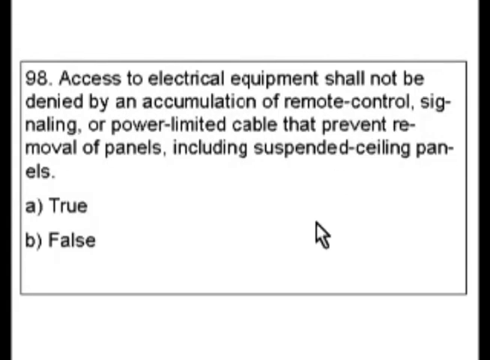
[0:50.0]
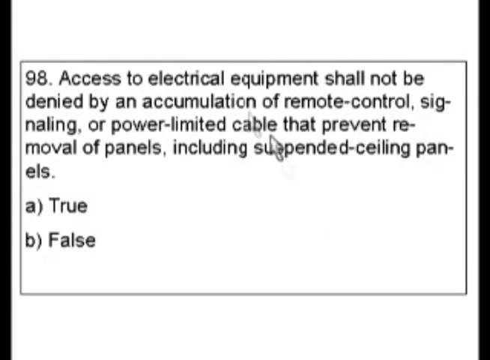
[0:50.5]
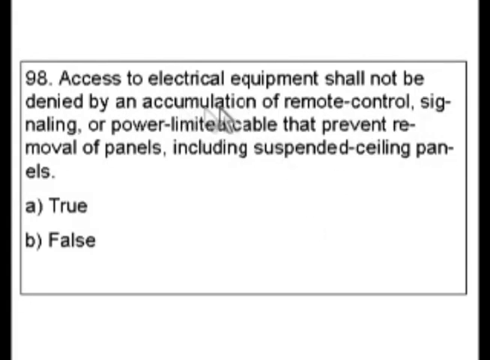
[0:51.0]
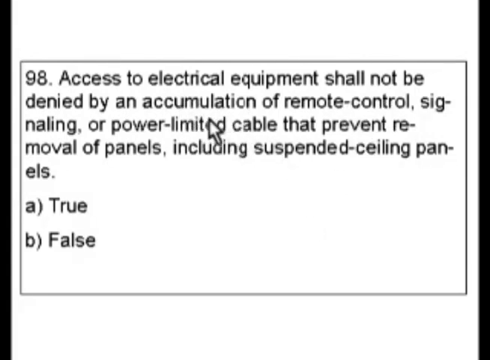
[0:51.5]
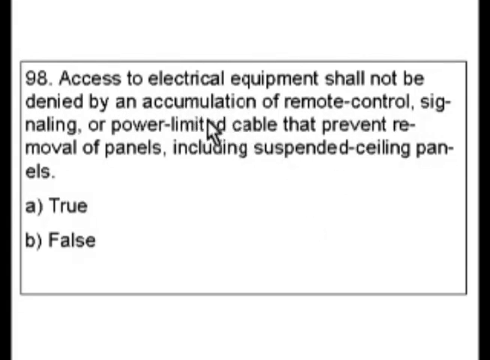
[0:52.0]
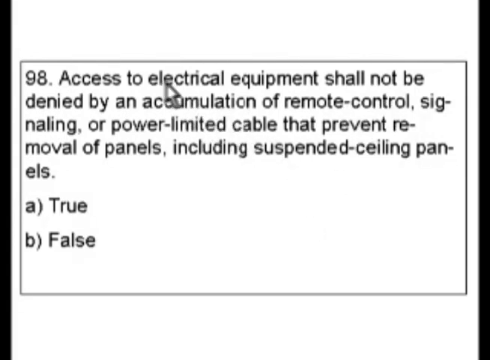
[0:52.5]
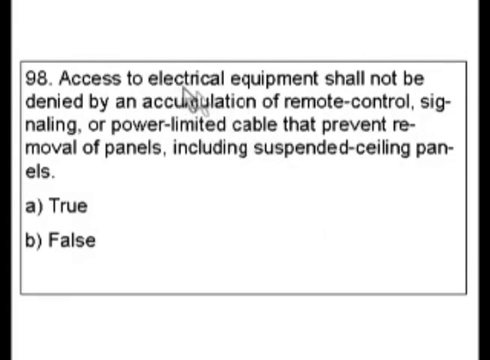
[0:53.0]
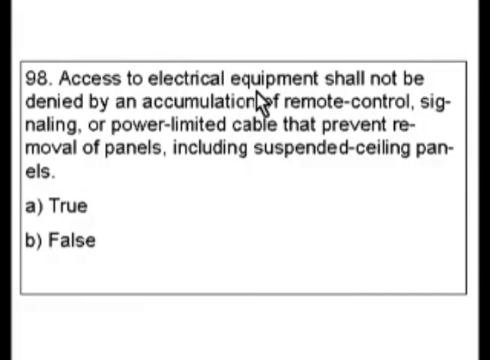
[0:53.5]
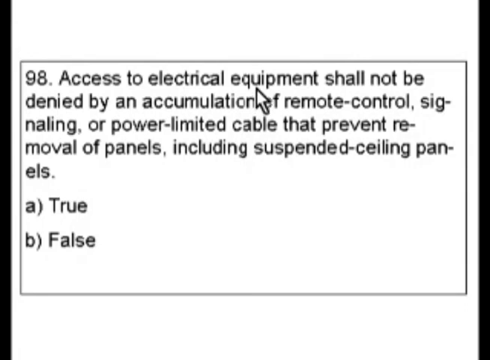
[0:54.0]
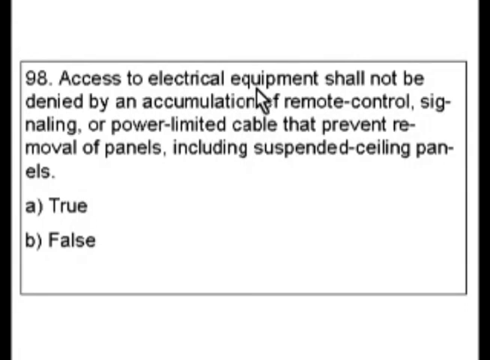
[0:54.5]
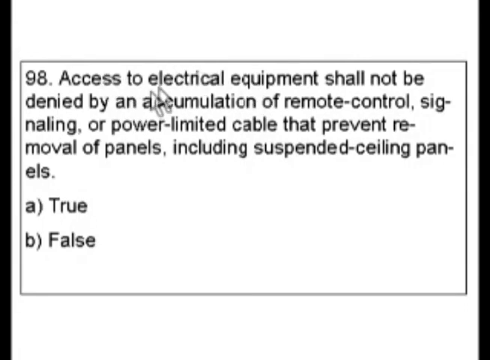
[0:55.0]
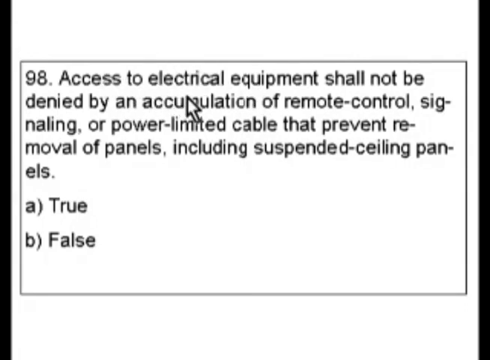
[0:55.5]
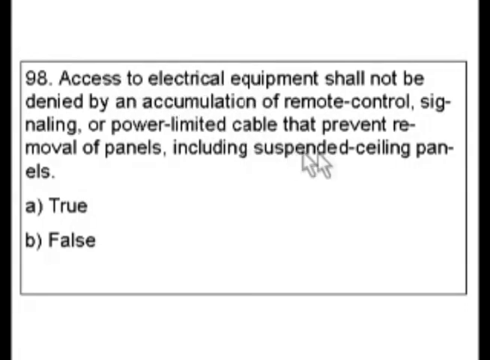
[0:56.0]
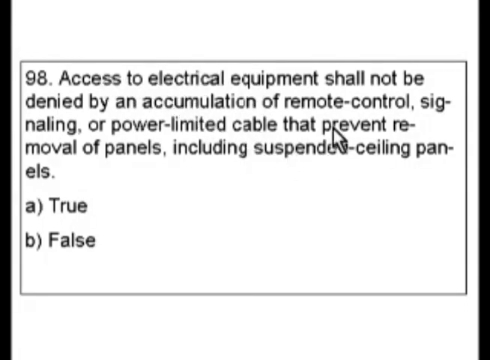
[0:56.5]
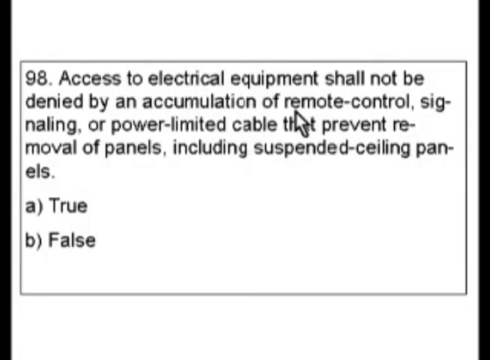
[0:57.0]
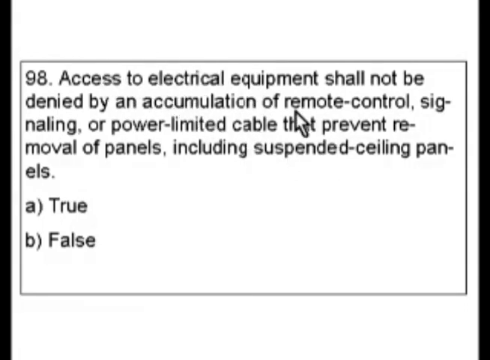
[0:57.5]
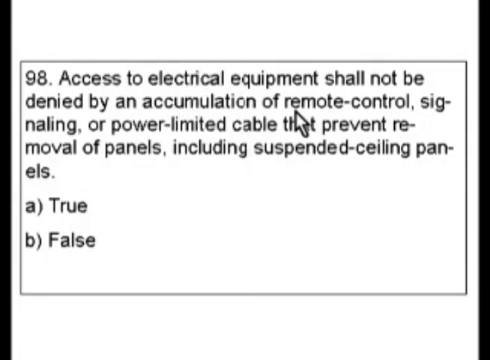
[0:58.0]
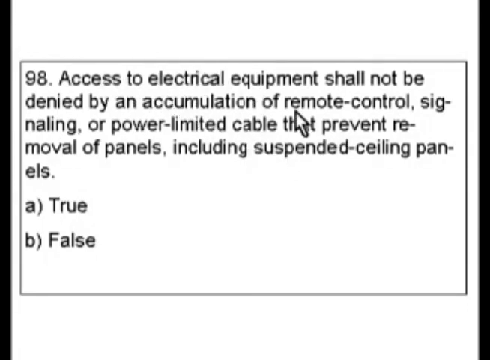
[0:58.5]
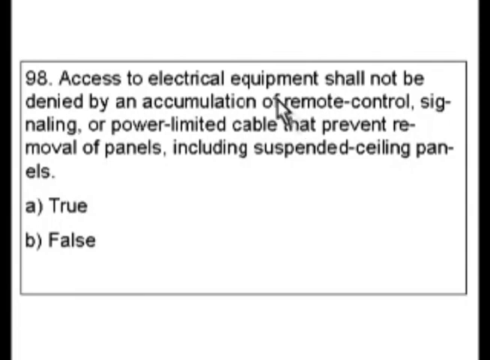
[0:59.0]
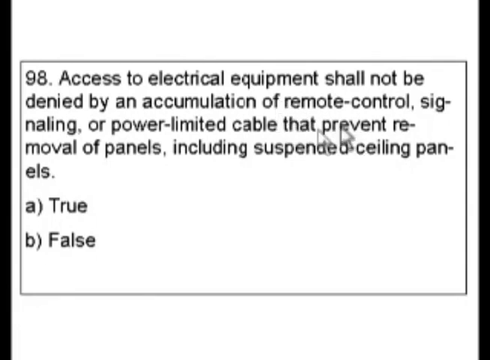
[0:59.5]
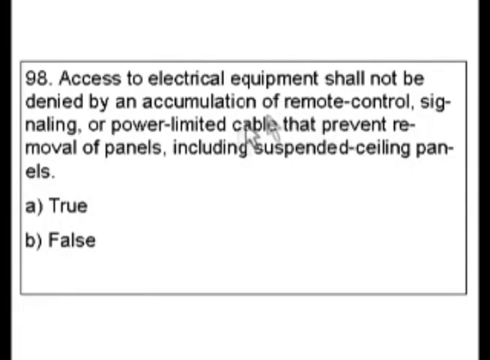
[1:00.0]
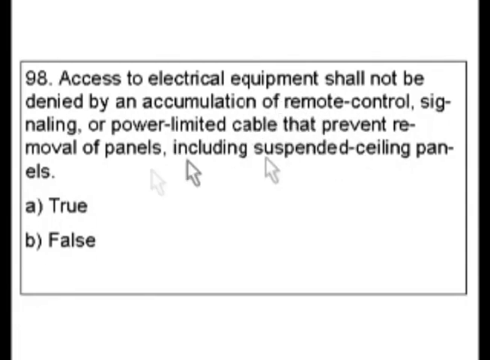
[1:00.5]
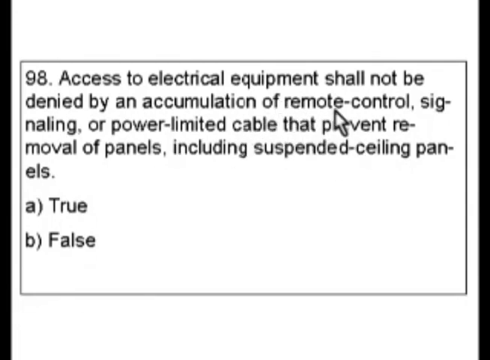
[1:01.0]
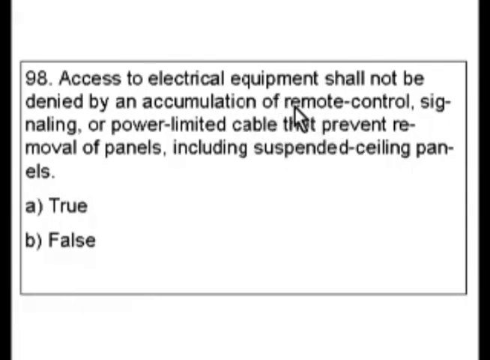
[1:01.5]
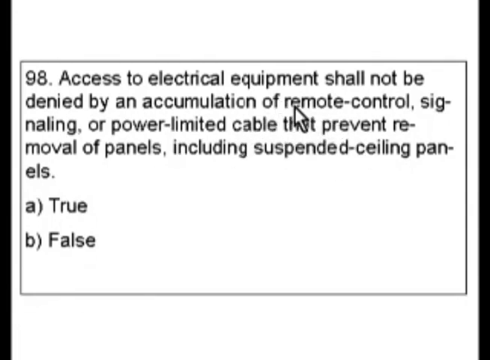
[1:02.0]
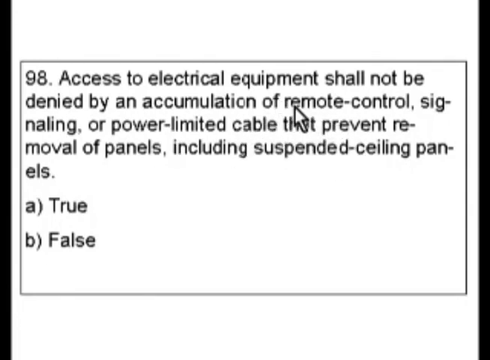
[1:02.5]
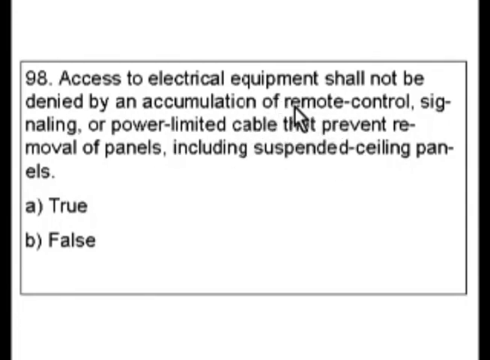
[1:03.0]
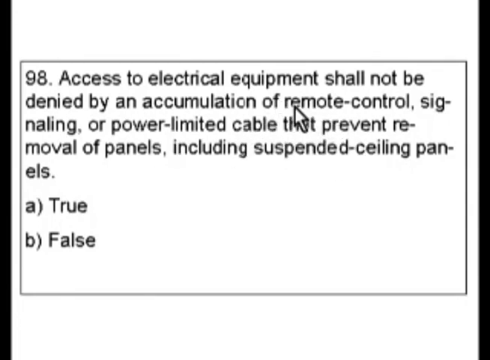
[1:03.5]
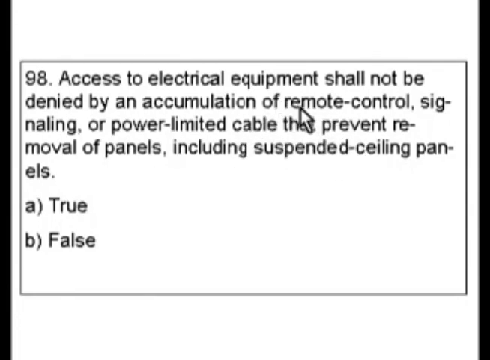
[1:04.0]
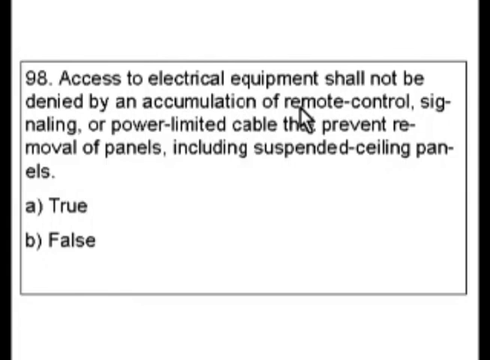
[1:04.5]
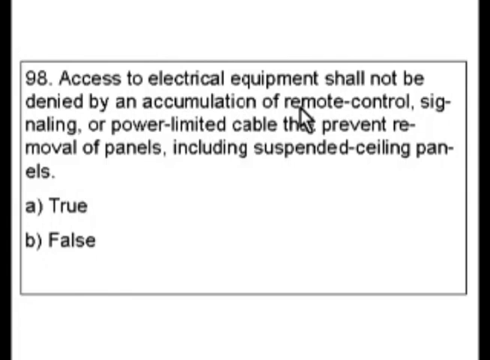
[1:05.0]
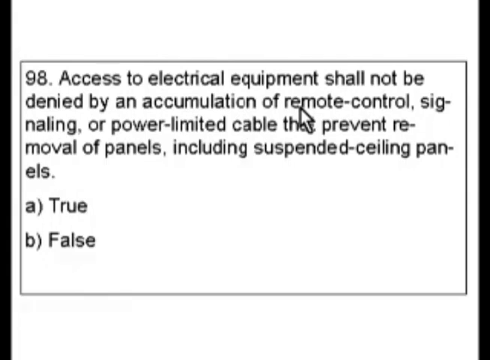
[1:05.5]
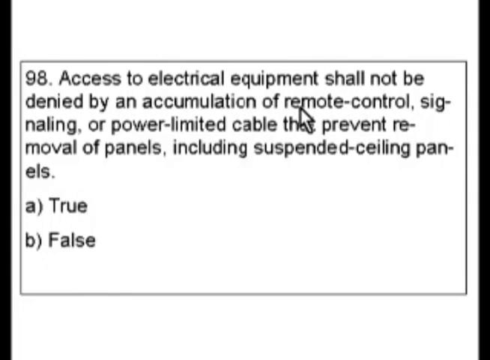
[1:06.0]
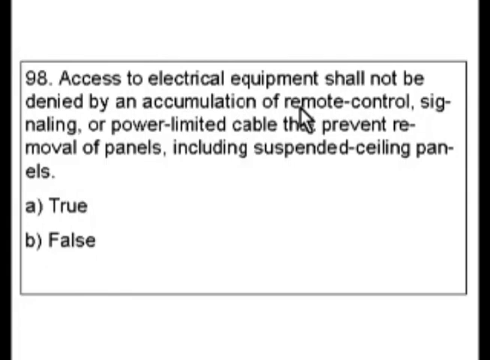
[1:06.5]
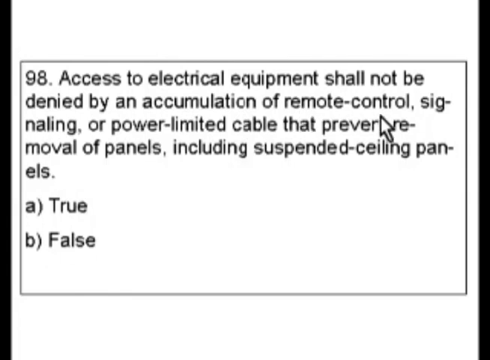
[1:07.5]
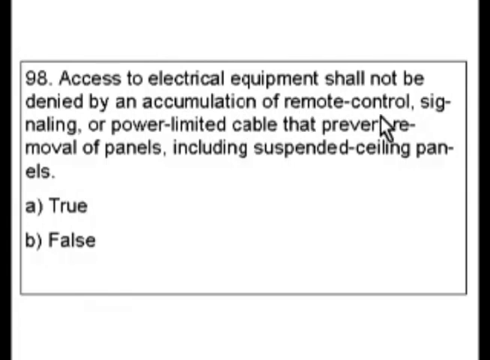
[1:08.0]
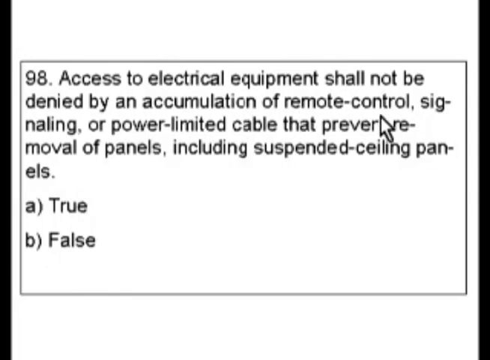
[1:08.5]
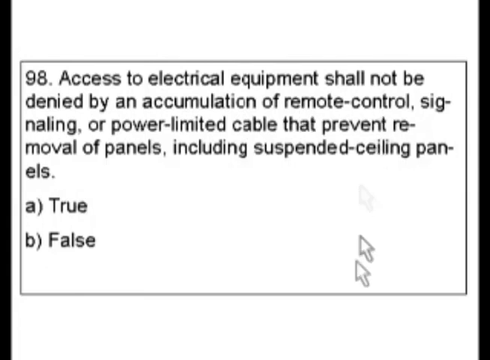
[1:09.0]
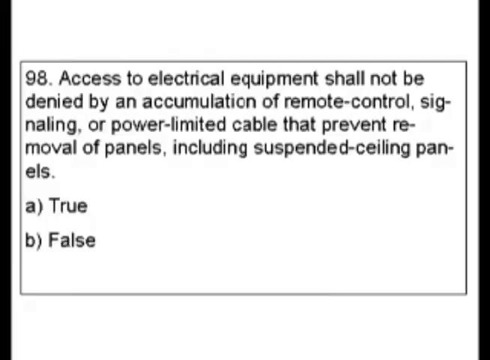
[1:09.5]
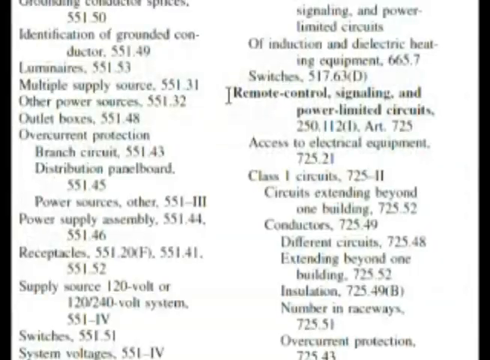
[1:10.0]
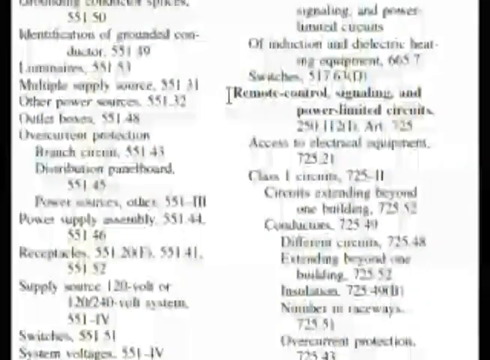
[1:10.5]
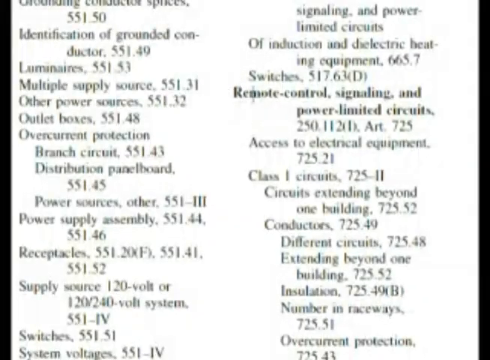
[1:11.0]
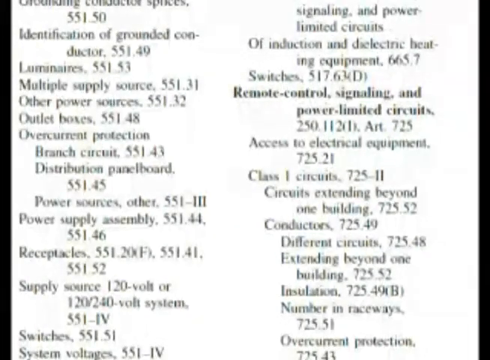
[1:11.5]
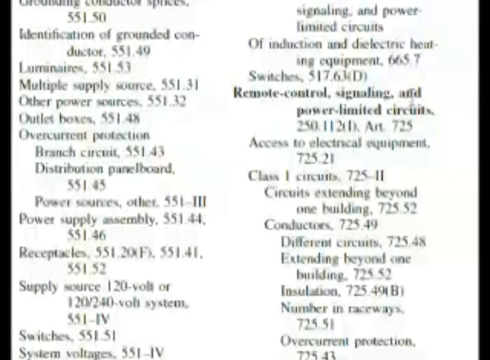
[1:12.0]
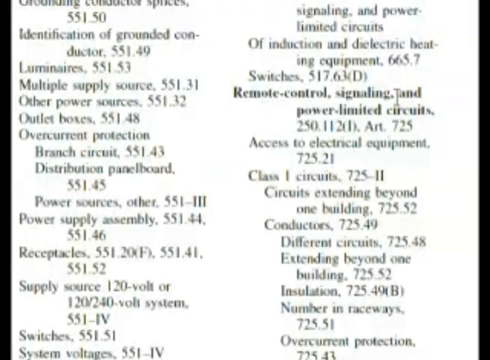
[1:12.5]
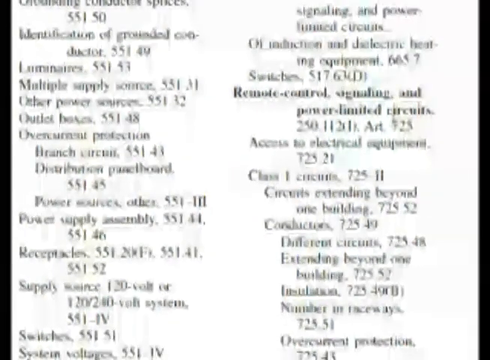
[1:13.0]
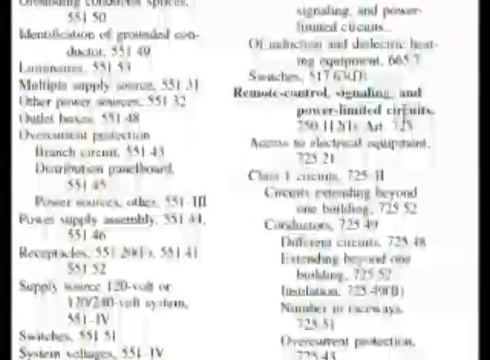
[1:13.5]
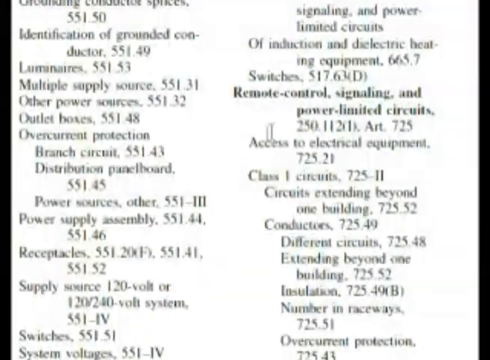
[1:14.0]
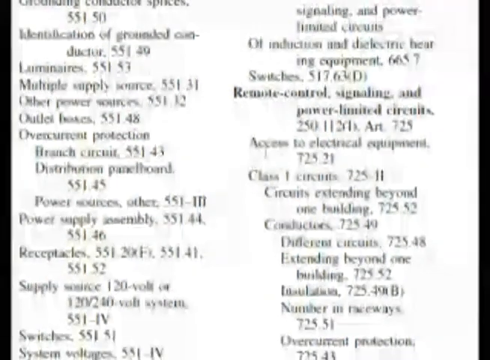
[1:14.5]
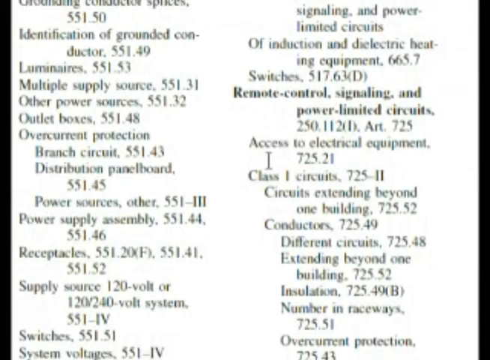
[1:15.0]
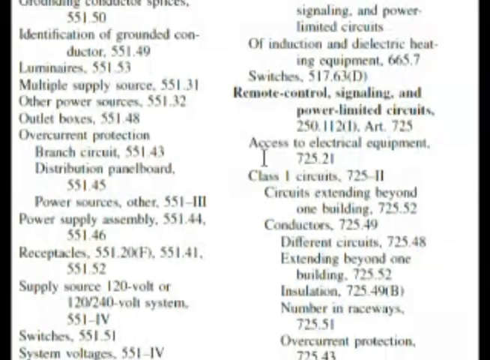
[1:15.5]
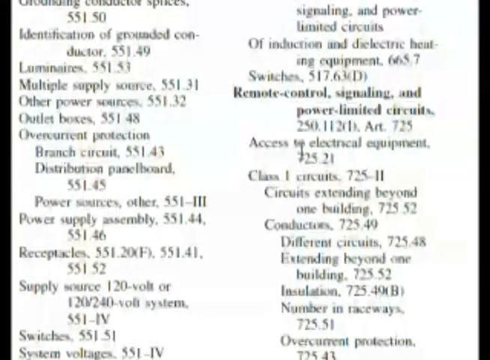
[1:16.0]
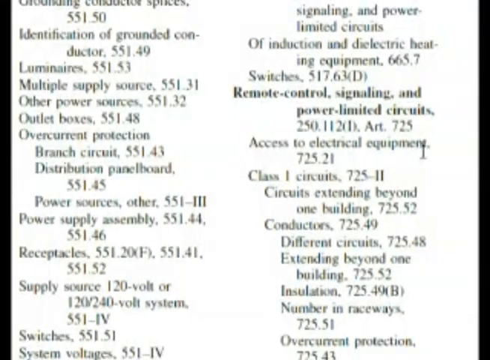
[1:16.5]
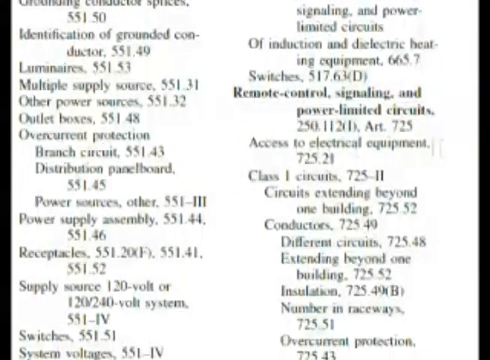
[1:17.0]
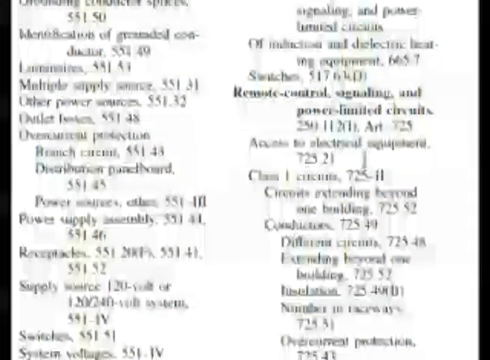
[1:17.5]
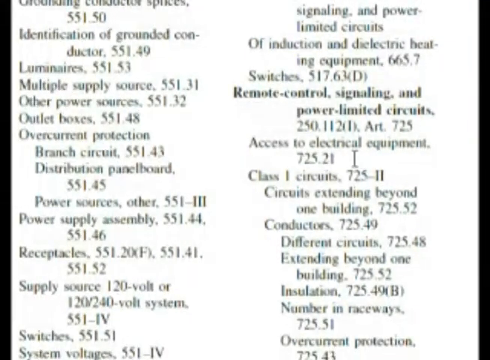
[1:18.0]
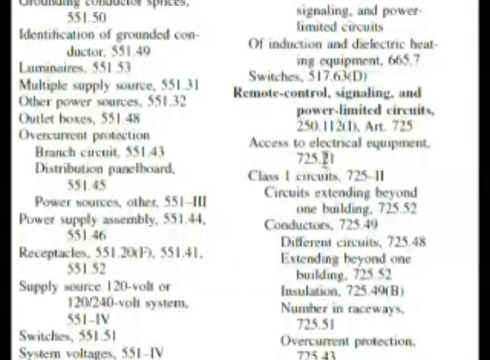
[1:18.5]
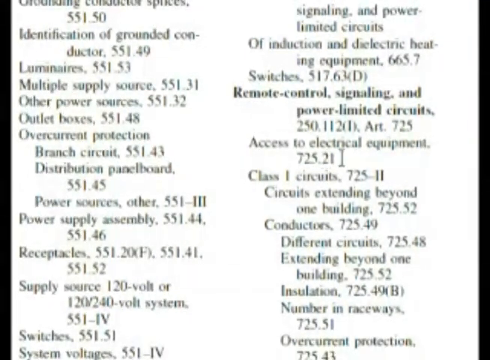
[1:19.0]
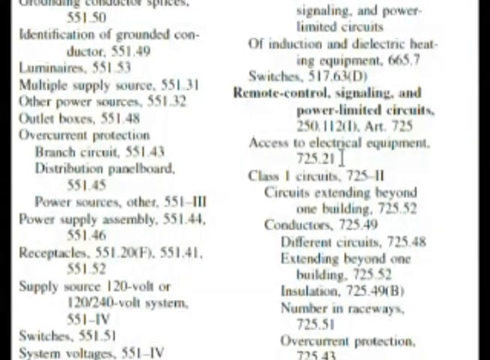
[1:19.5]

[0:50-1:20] Question 98 is shown with a thin black frame on a white background. It reads "access to electrical equipment shall not be denied by accumulating a remote controlling signaling on power limited cable that prevents removal of panels including suspended ceiling panels." There are two choices: the first, labeled A, is true, and the second, labeled B, is false. The cursor moves across the text, probably as the user reads it. Then the view goes back to a list with entries reading something like control signaling and power limited circuits, access to electrical equipment, and panelboards and branch circuits. Numbers appear next to these entries, suggesting this might be a book and the numbers are its pages.